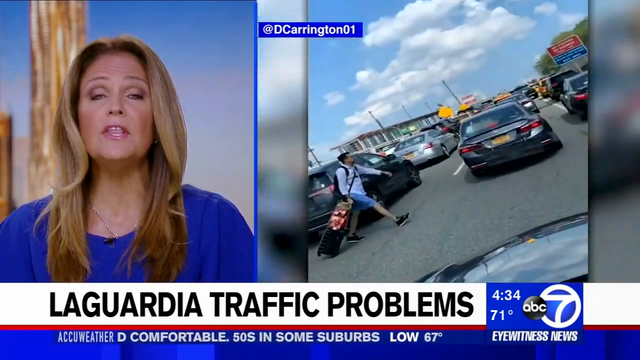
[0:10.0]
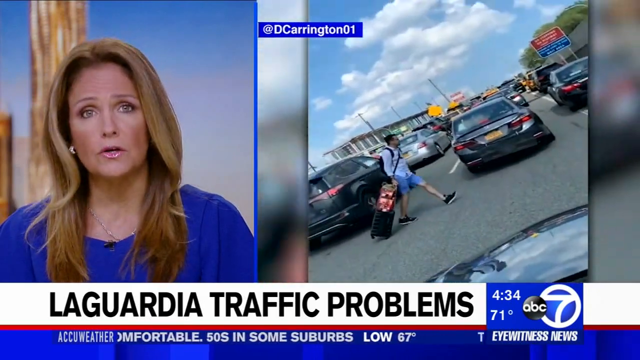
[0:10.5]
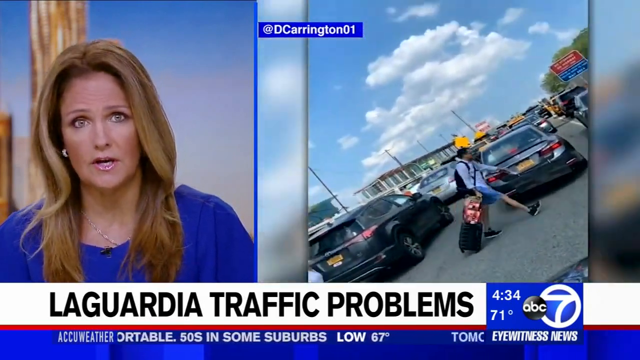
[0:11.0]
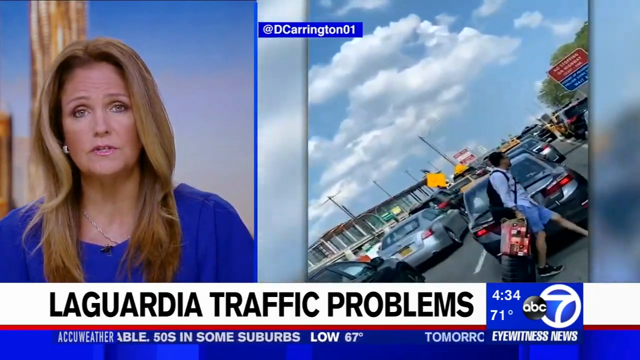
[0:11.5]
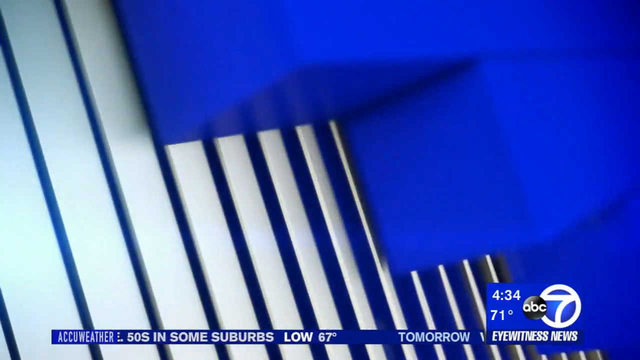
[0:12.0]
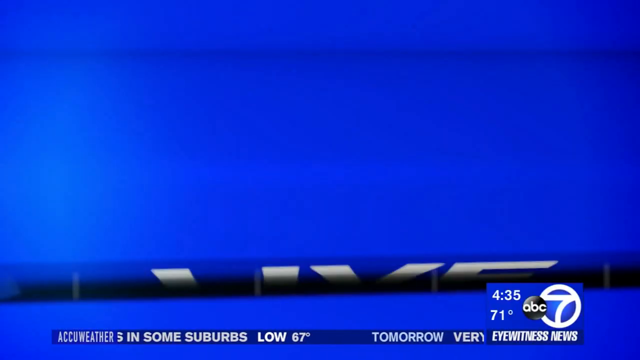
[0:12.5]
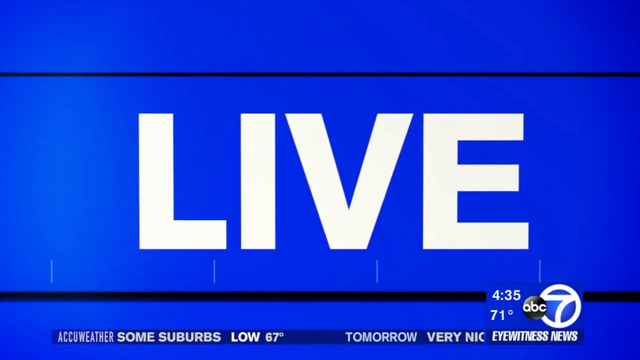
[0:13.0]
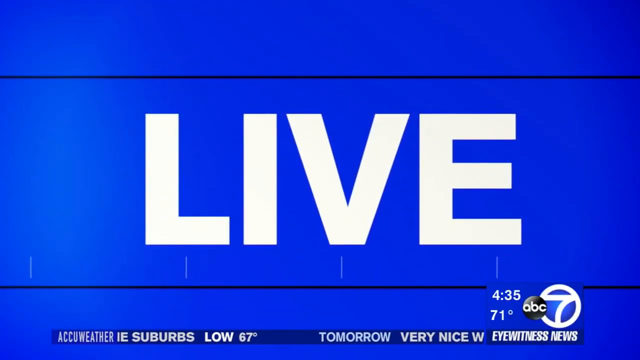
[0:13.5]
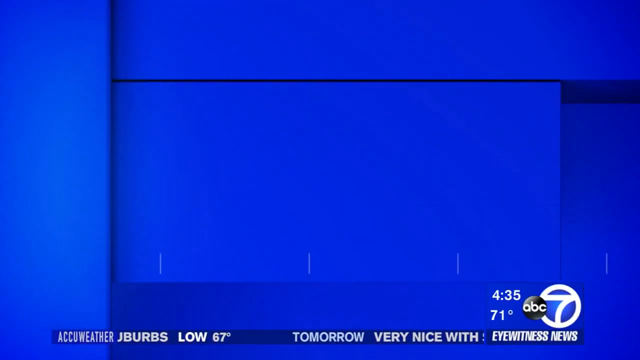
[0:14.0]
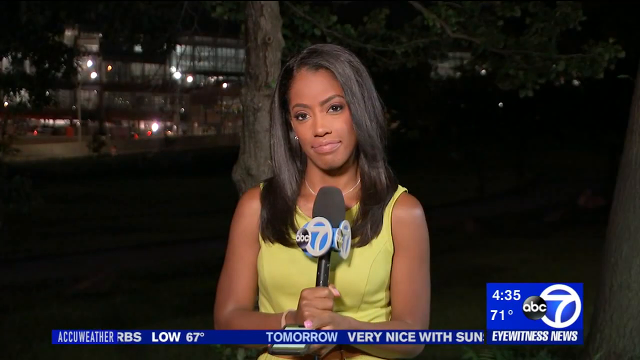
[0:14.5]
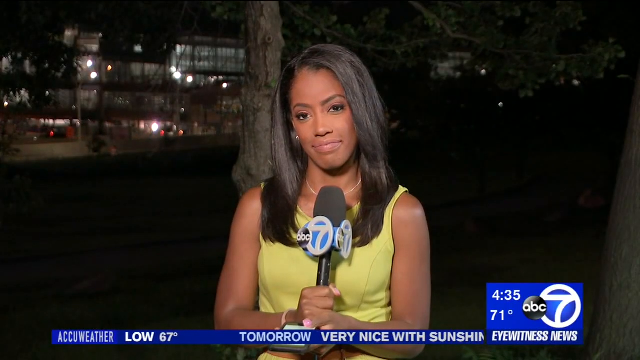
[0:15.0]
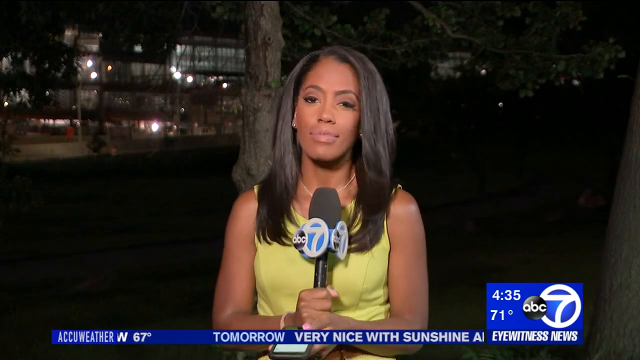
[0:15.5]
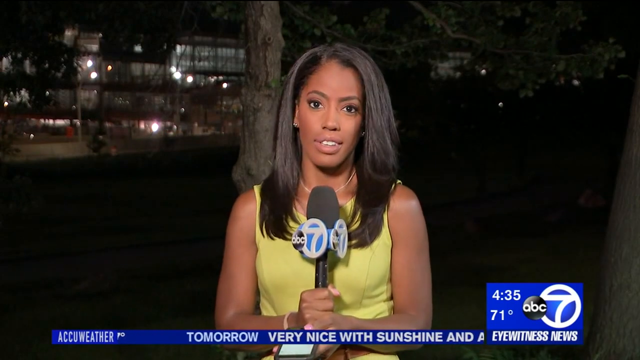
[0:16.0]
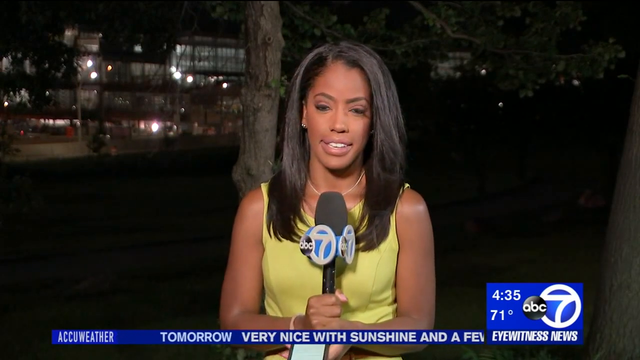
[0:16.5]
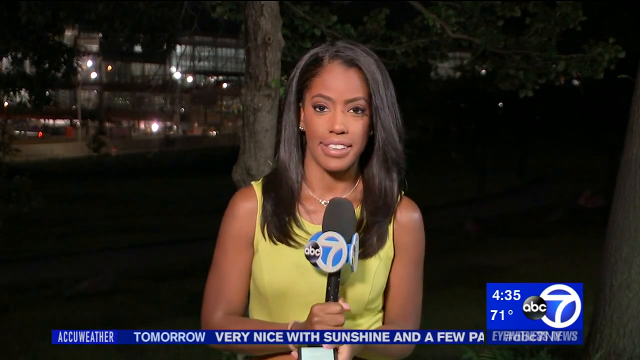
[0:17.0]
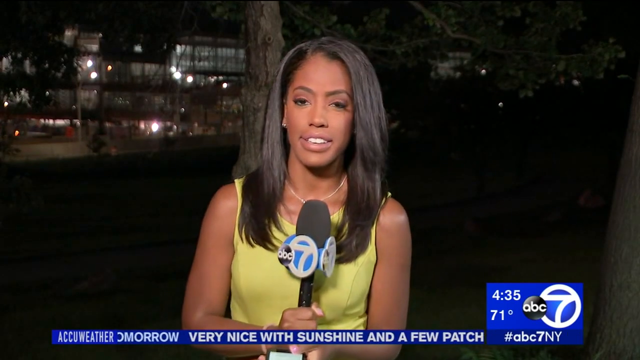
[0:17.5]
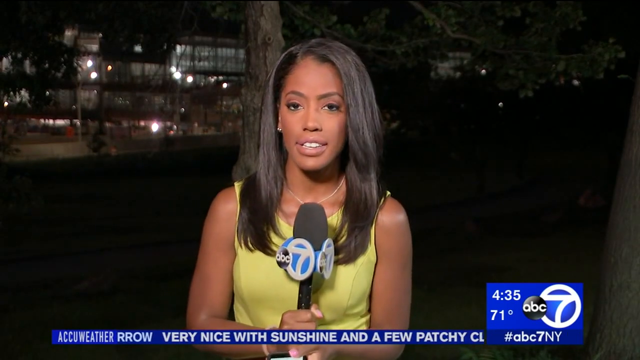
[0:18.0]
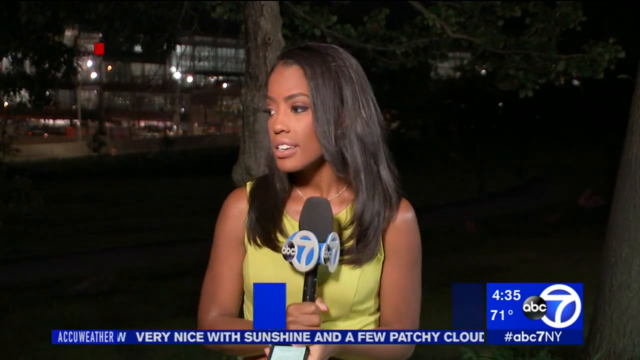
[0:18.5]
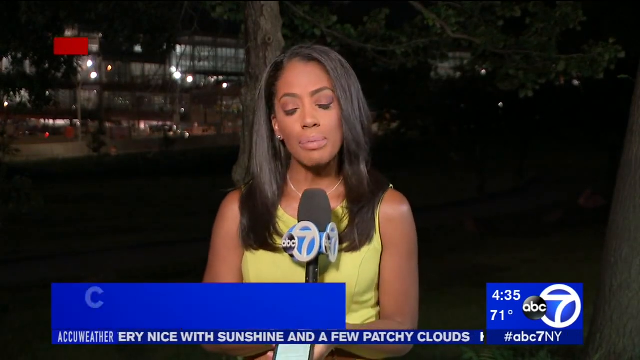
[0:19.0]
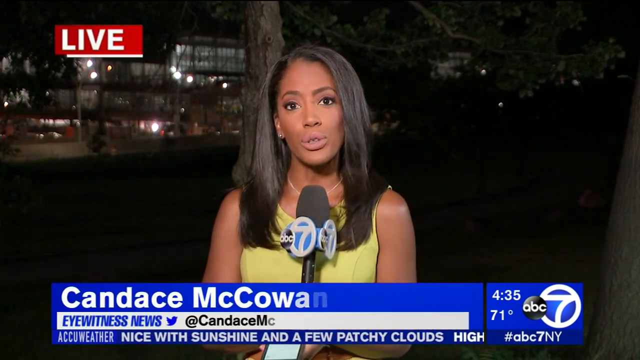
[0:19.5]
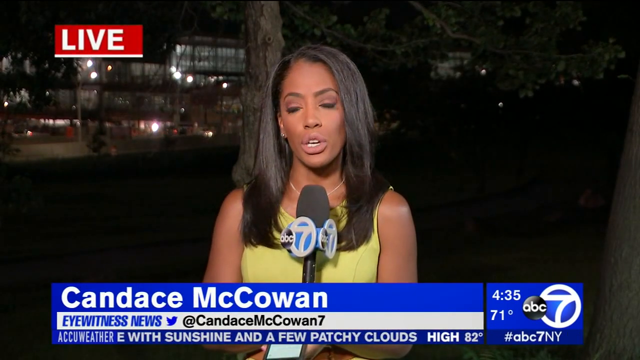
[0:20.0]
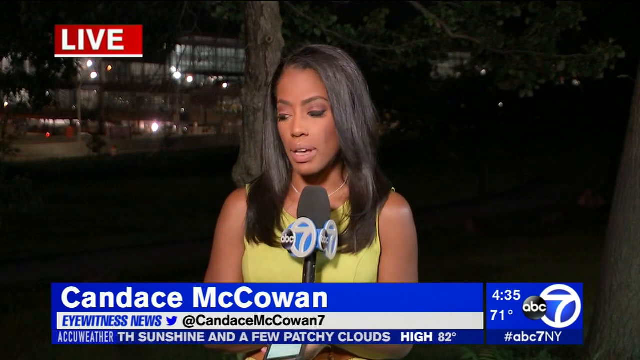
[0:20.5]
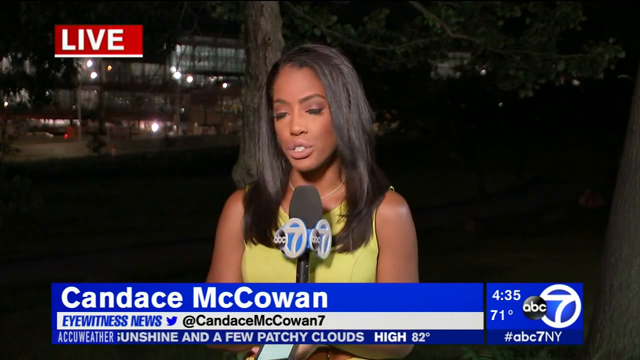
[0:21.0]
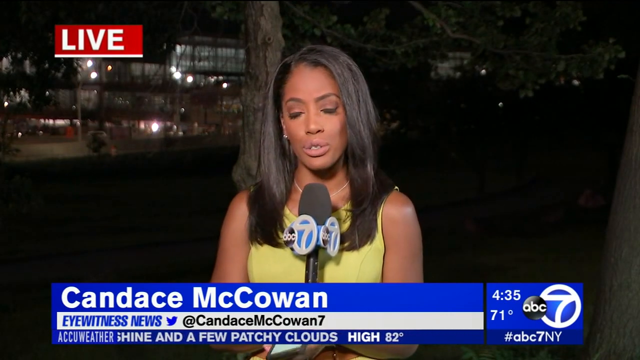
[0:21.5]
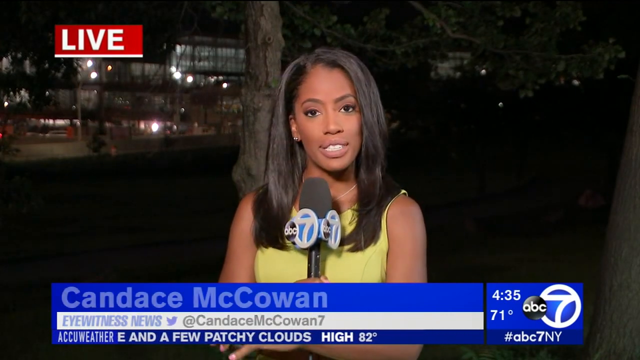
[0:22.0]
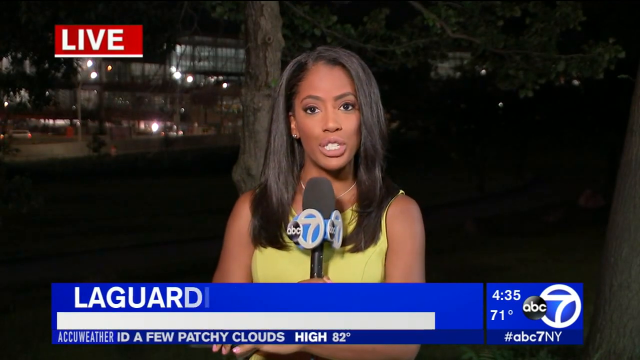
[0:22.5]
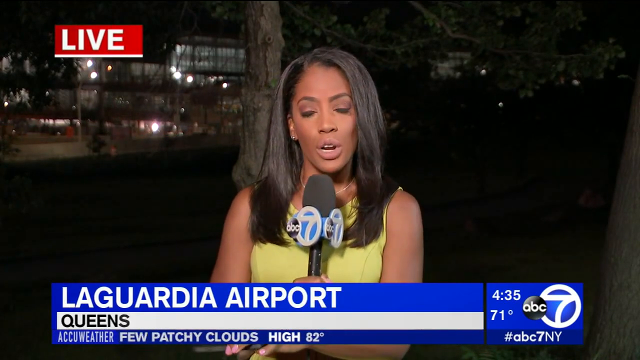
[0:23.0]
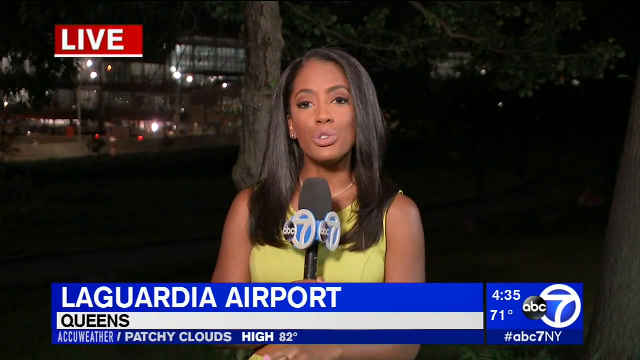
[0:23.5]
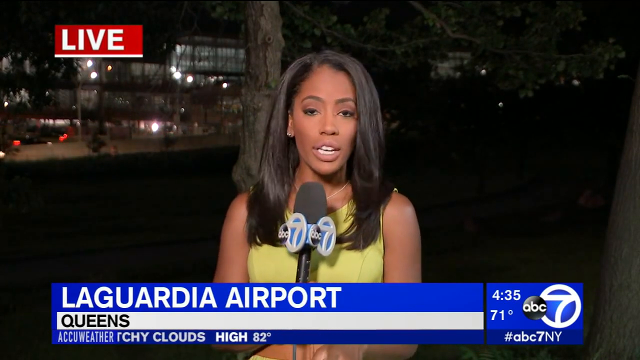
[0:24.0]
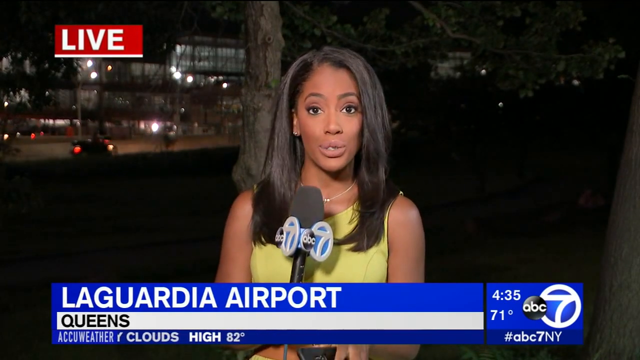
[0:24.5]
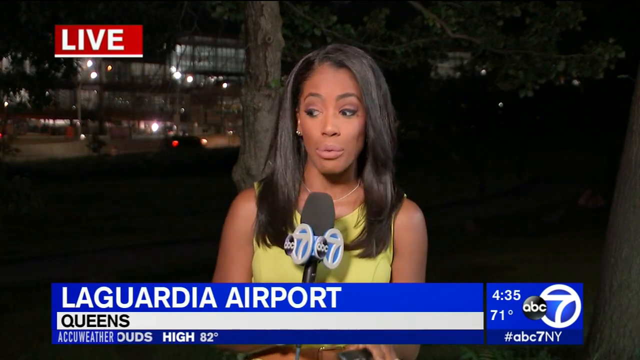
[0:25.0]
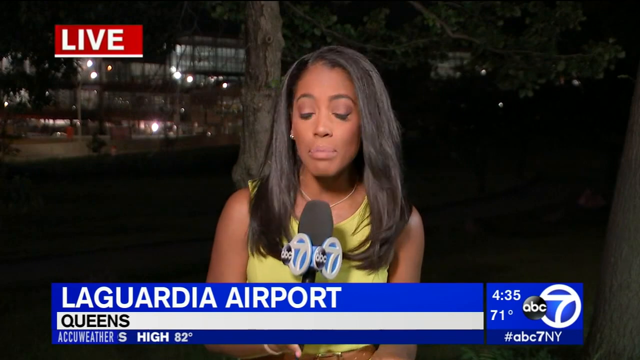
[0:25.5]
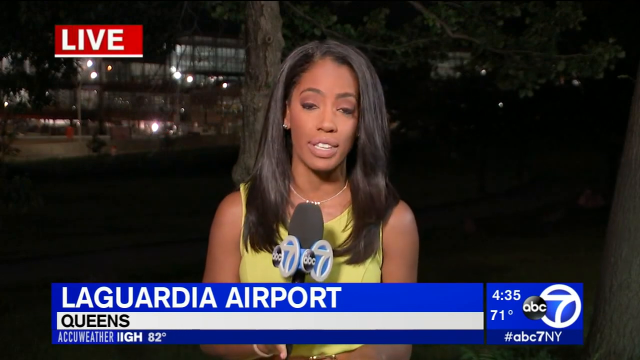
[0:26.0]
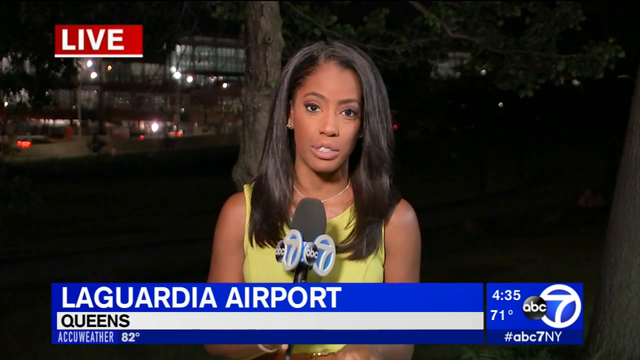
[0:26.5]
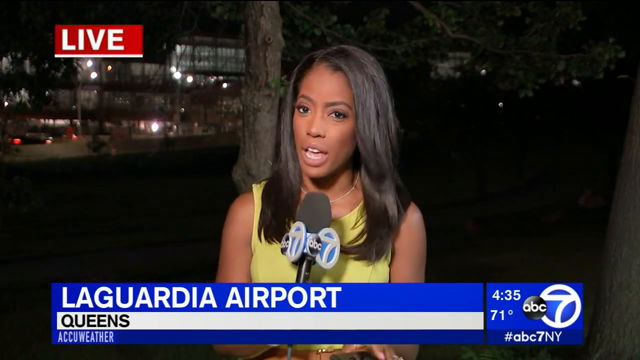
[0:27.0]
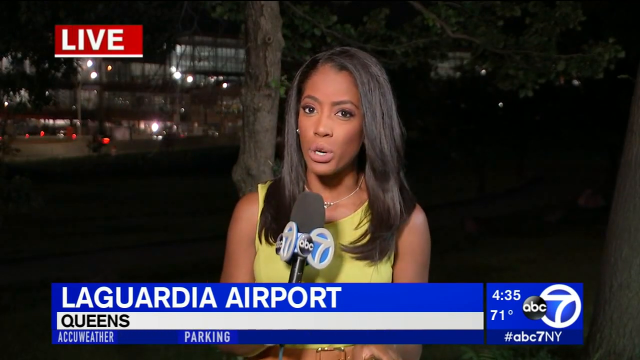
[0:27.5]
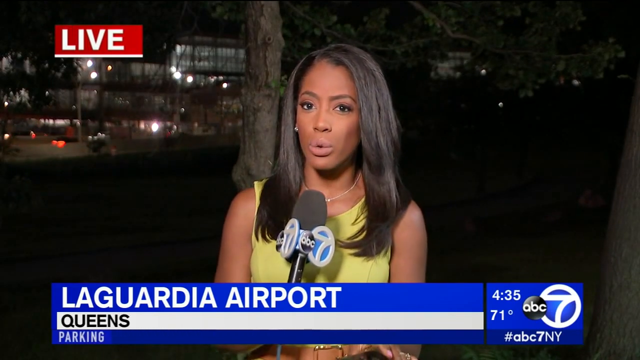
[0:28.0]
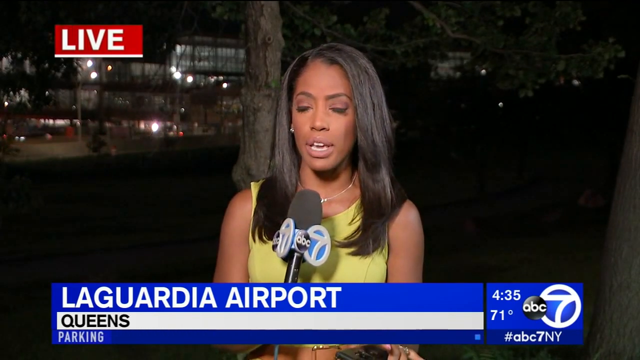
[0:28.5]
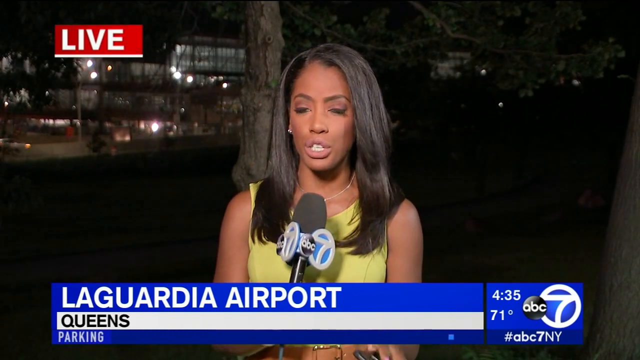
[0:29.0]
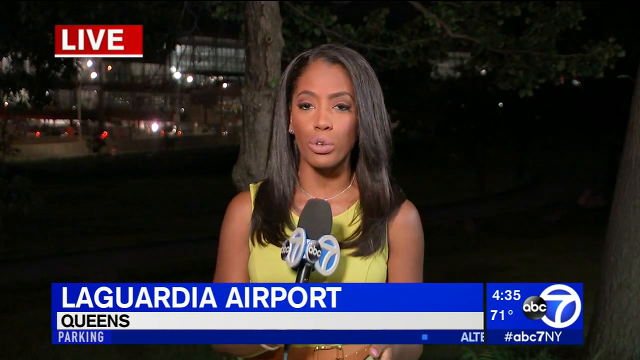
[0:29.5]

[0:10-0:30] The two separate boxes remain. In one is a woman with blonde hair, a blue top and pink lipstick. The box on the right shows a road full of cars with "DC Carrington 01" written on it, and the cars seem to be stuck in traffic. Below, text reads "La Guardia traffic problems", with the time 4:34 PM and "ABC Eyewitness News". The word "live" appears, and the view moves to a lady in a yellow dress holding a microphone. Forecast text reads "tomorrow, very nice with sunshine and a few patchy clouds high 82 degrees". Another text reads "La Guardia airport Queens parking".